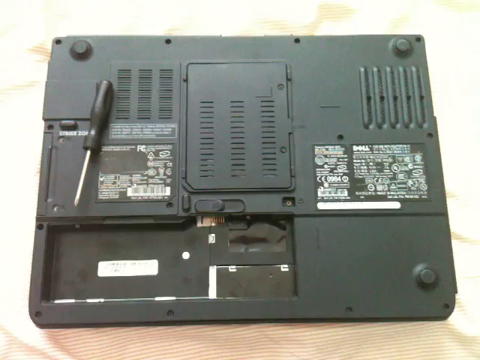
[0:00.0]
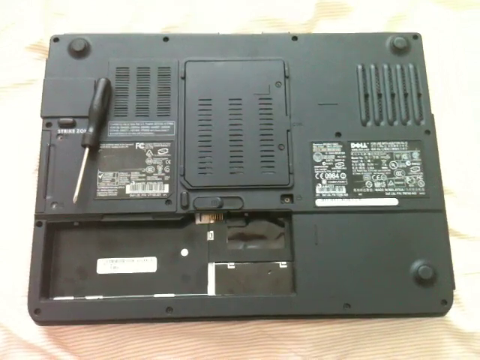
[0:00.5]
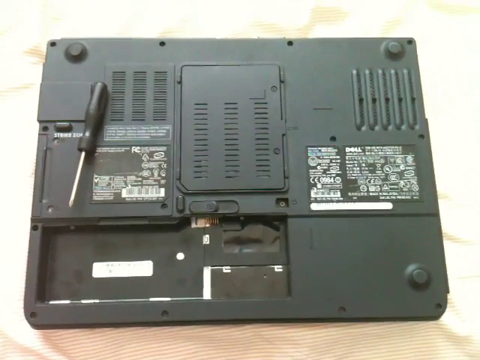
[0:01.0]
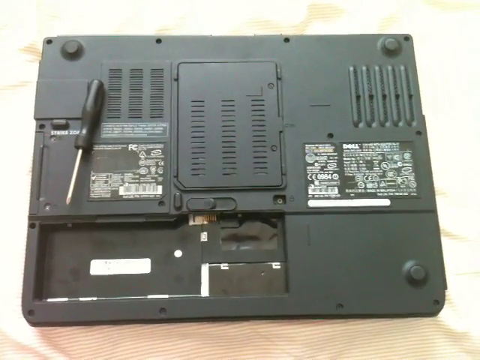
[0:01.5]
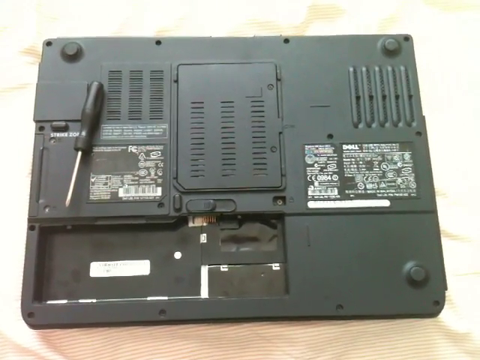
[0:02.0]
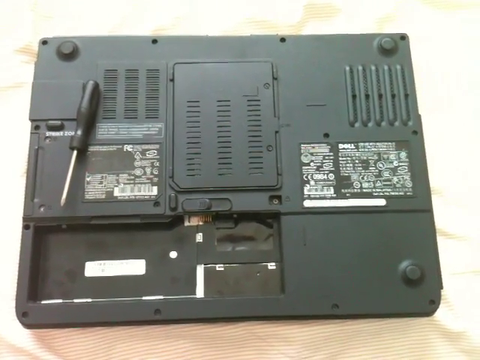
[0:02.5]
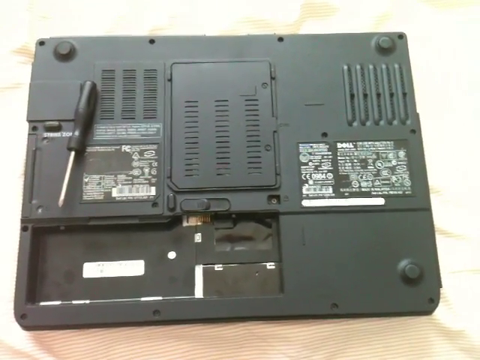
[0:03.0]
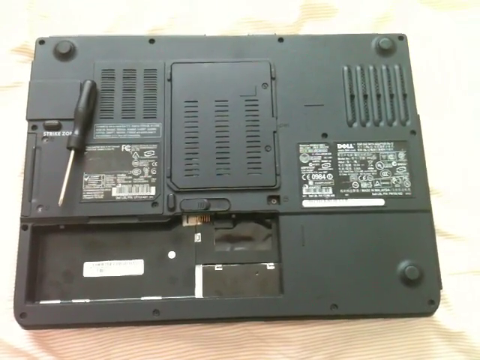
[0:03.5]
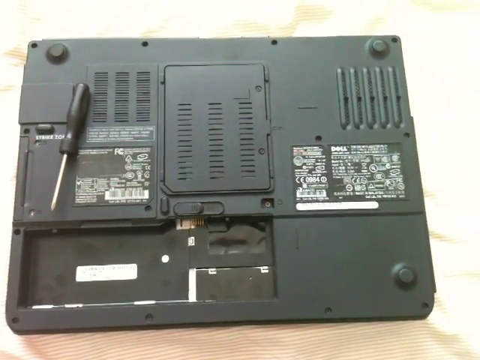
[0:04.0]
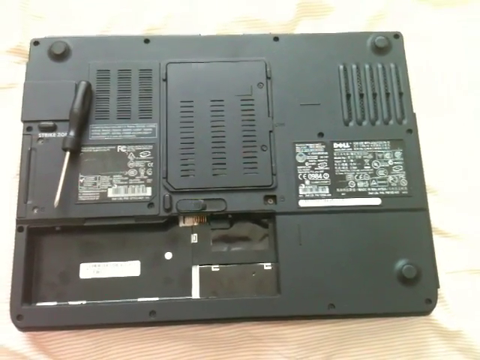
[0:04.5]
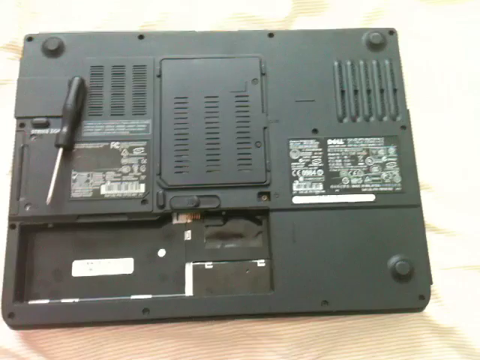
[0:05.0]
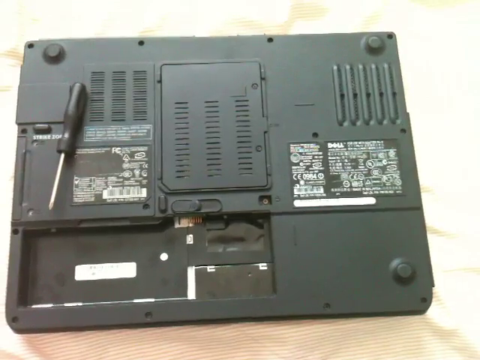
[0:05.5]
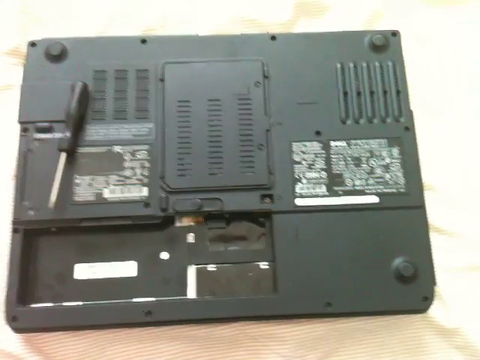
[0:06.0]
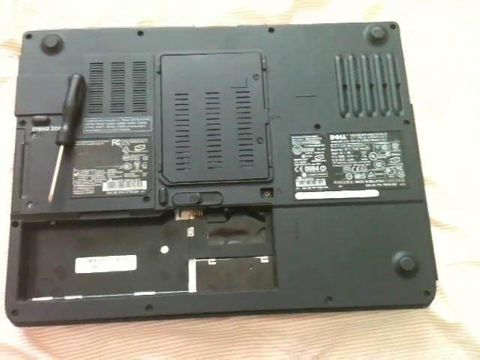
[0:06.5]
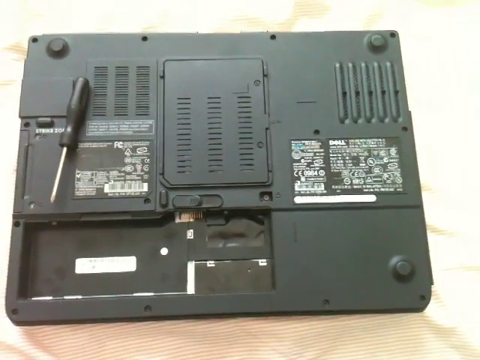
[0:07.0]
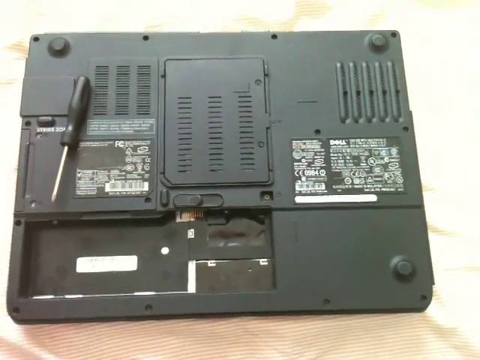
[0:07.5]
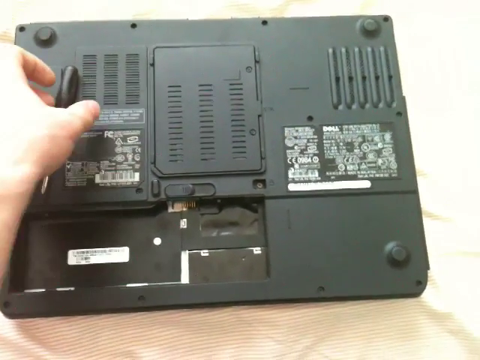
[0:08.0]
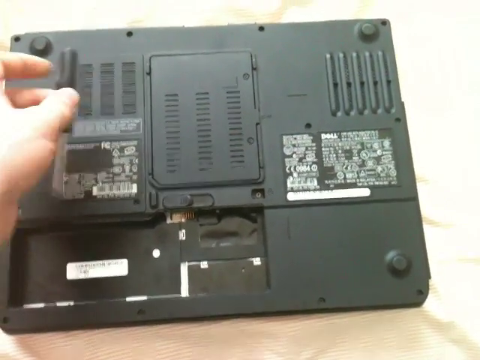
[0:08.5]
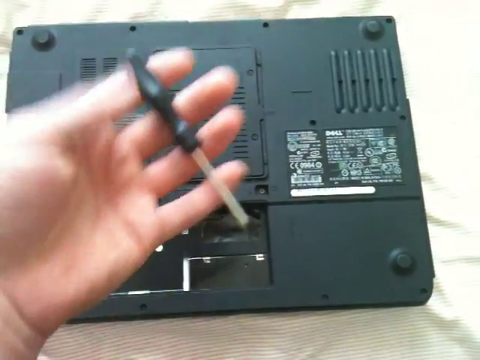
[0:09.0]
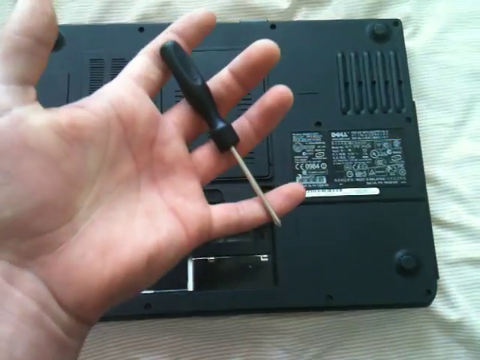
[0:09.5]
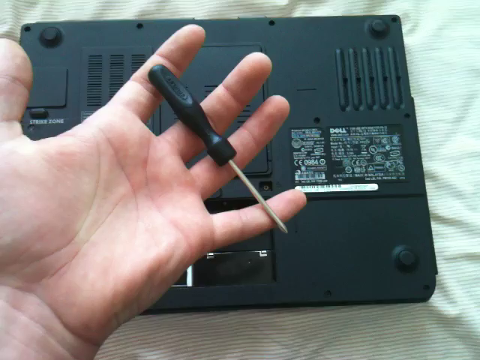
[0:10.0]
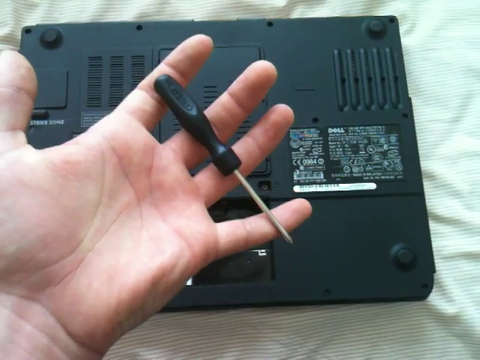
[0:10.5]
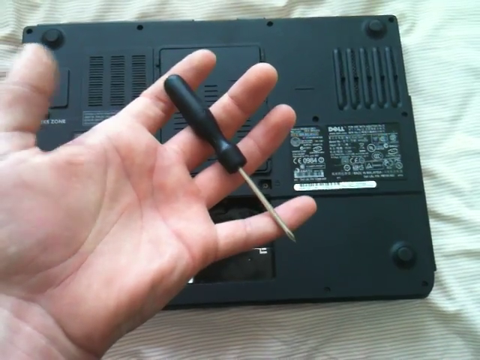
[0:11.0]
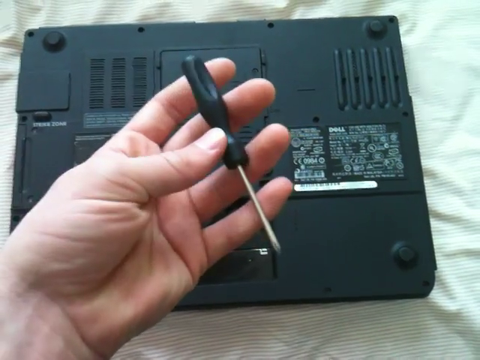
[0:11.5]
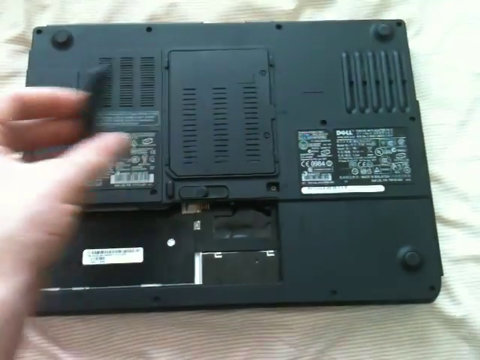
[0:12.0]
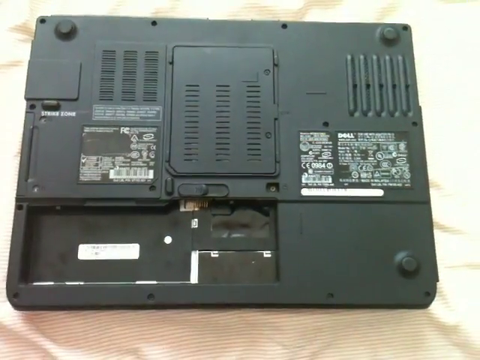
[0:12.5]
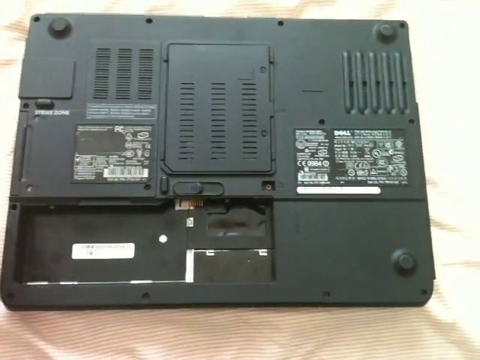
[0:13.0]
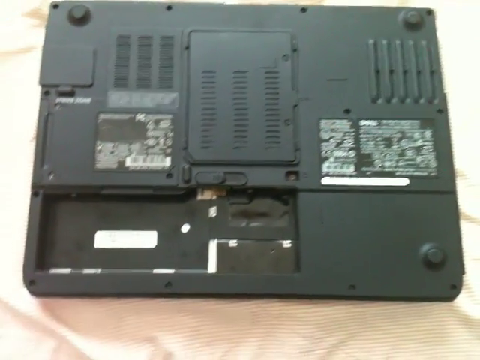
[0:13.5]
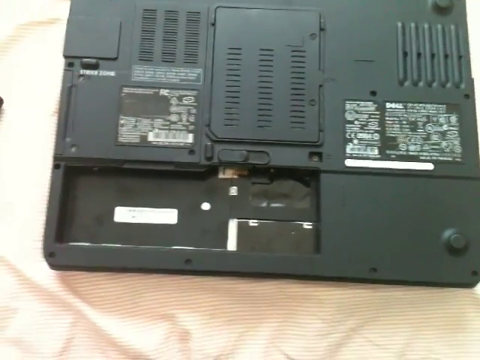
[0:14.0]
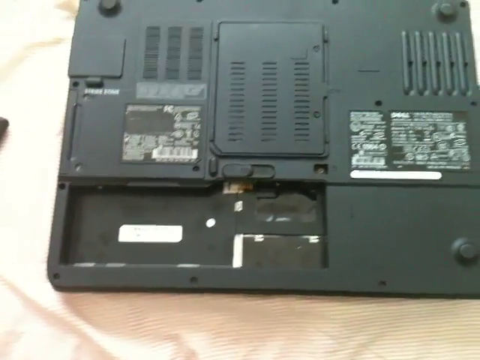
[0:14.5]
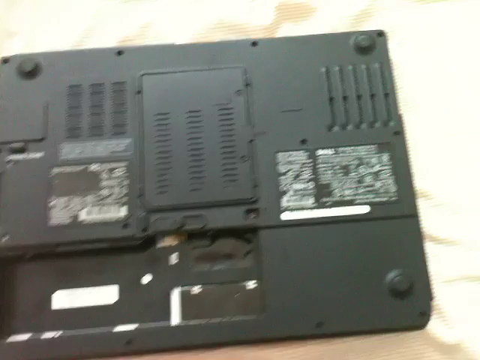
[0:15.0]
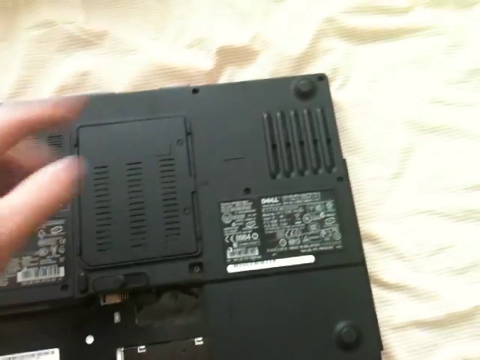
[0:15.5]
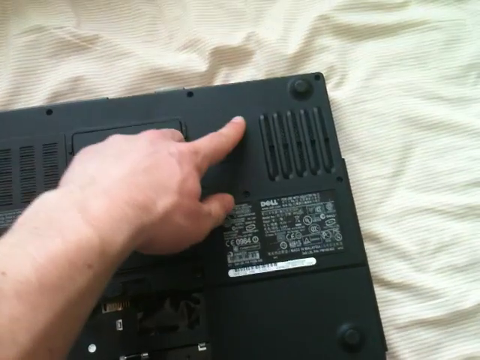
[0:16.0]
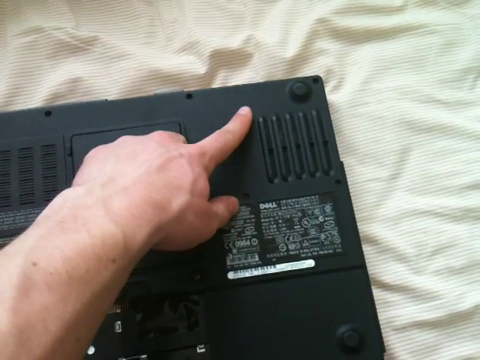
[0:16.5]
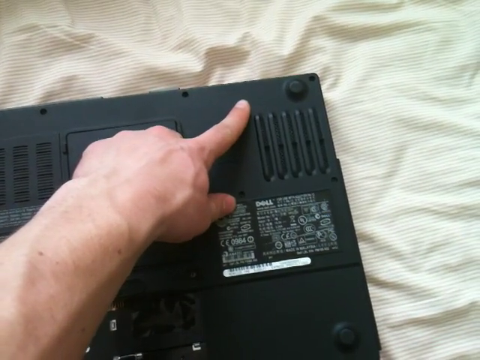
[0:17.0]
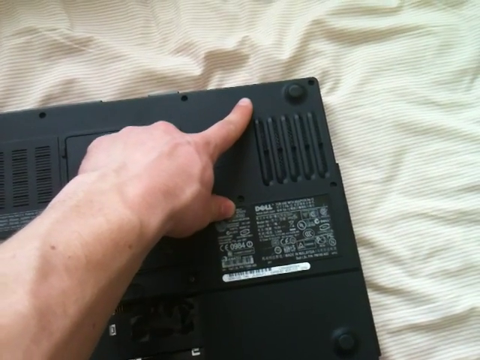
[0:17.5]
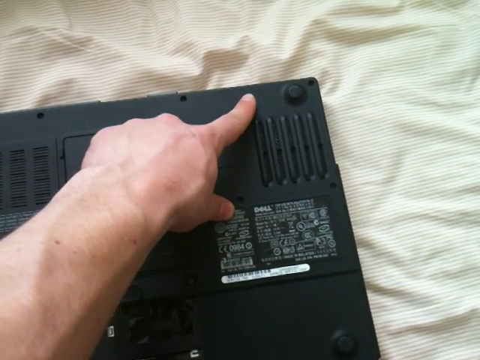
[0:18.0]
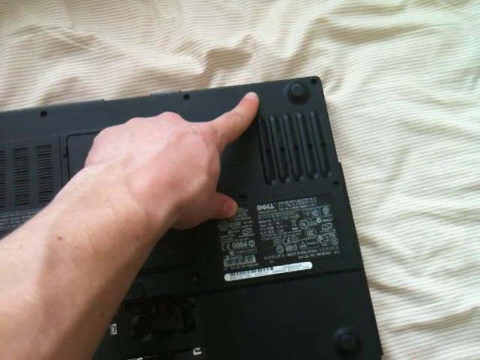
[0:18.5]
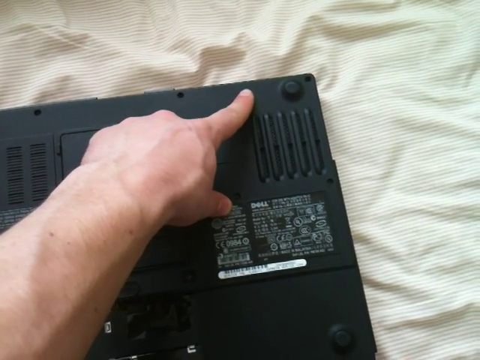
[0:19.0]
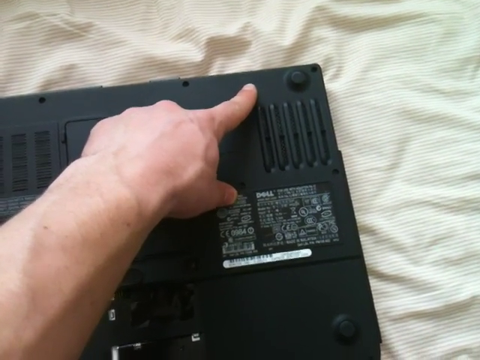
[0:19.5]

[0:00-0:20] A device is placed upside down, showing its back, with some writing on it indicating it is from Dell. A man's hand shows a tool, apparently one used to work on this machine, and at one point points to where the tool can be used, apparently to open the machine. The image of the device is blurred and not easily noticeable. The focus is on the device, its appearance, and the one tool presented.